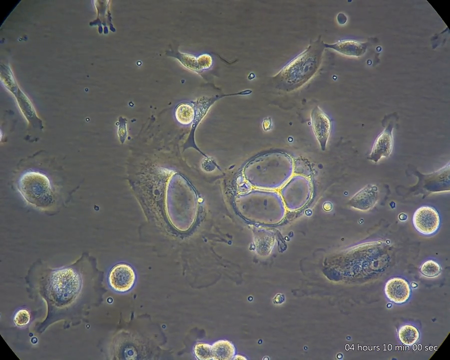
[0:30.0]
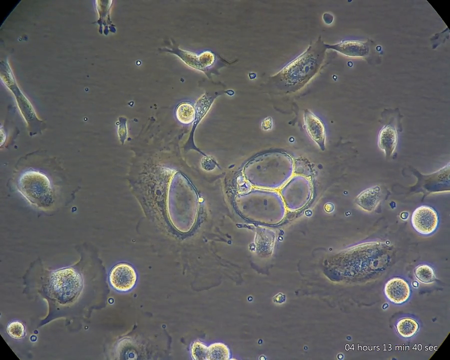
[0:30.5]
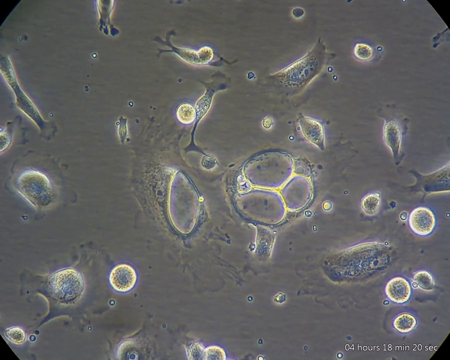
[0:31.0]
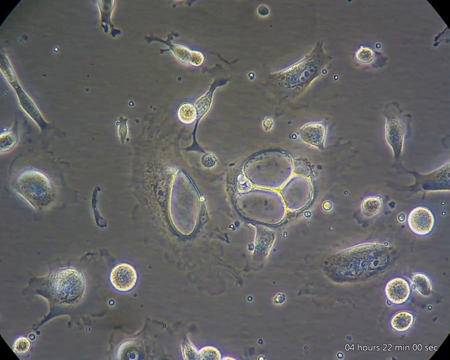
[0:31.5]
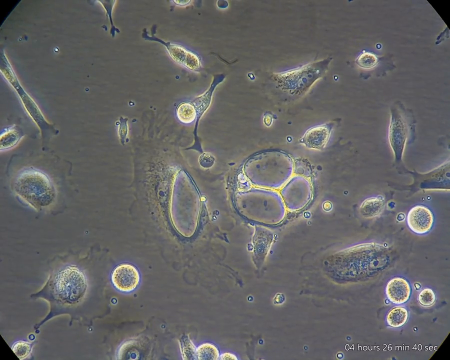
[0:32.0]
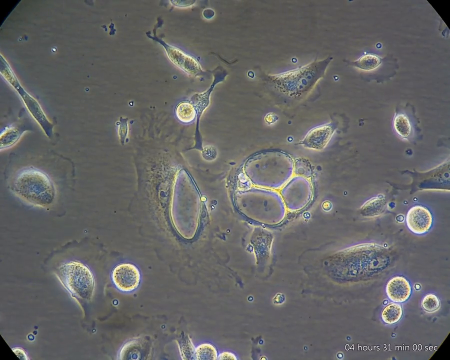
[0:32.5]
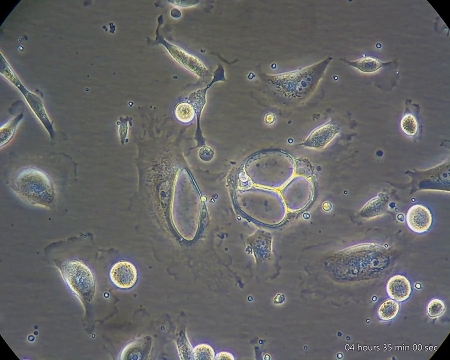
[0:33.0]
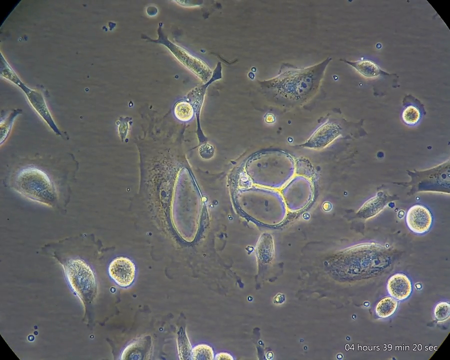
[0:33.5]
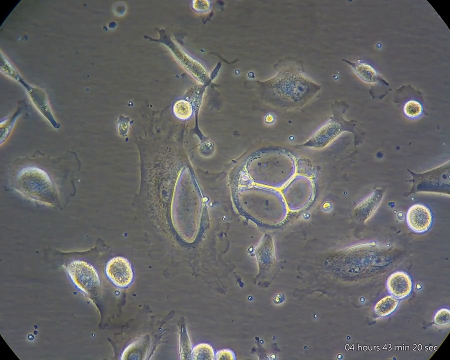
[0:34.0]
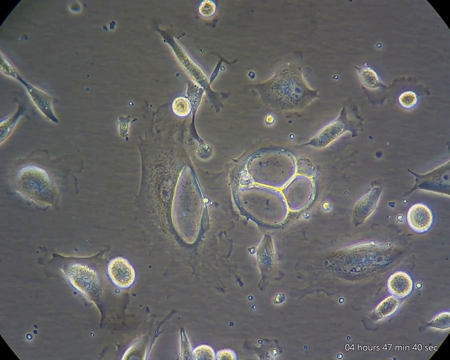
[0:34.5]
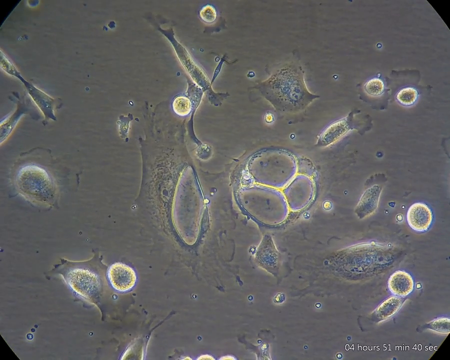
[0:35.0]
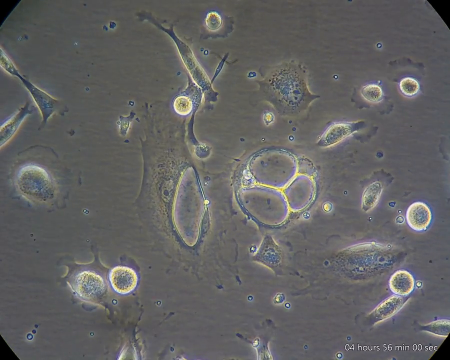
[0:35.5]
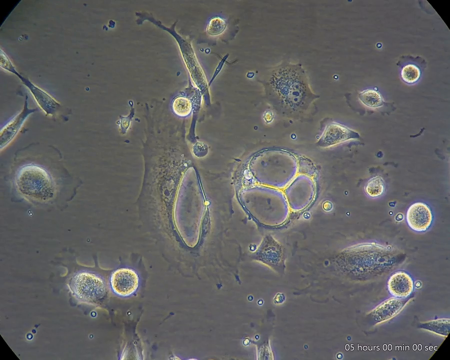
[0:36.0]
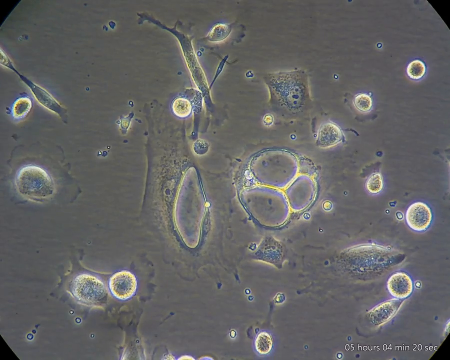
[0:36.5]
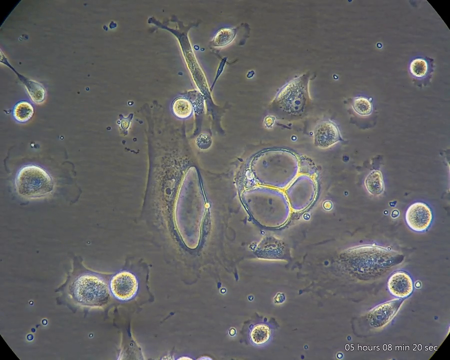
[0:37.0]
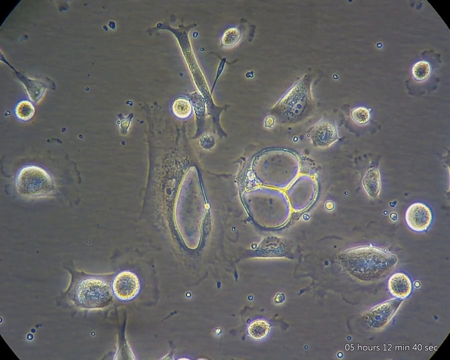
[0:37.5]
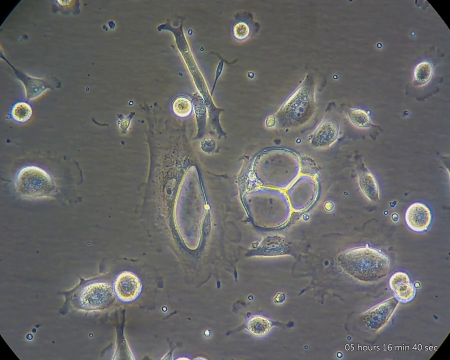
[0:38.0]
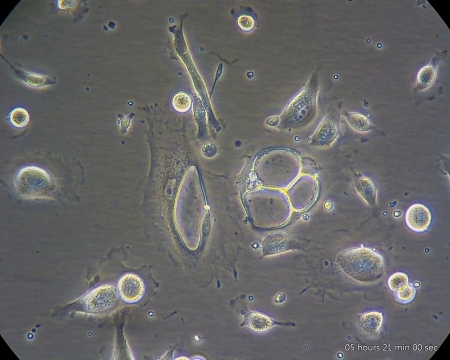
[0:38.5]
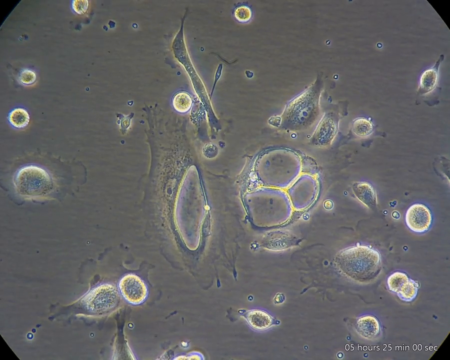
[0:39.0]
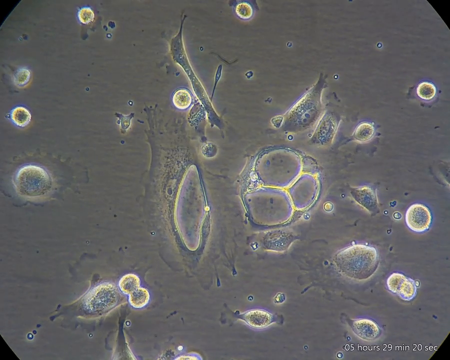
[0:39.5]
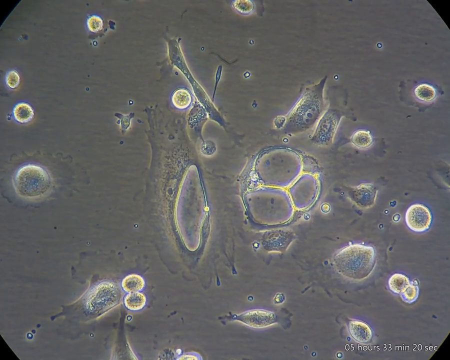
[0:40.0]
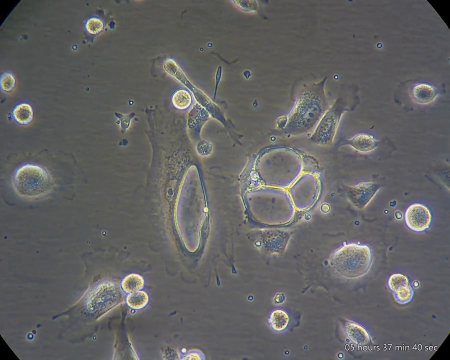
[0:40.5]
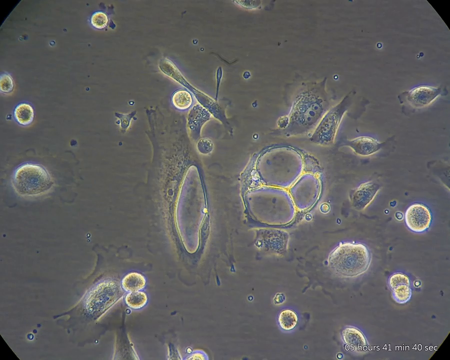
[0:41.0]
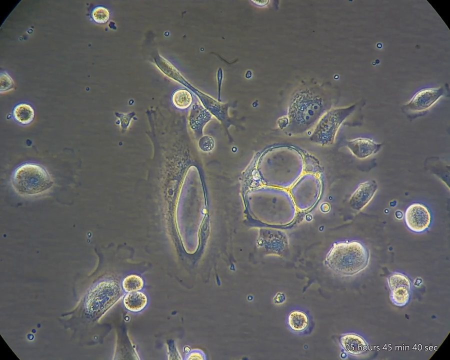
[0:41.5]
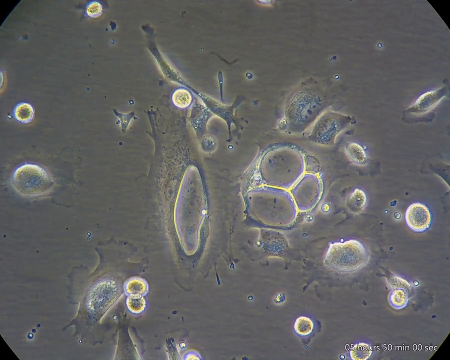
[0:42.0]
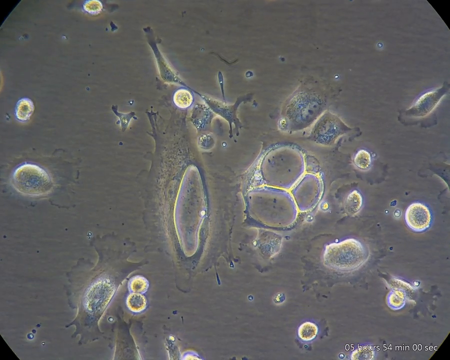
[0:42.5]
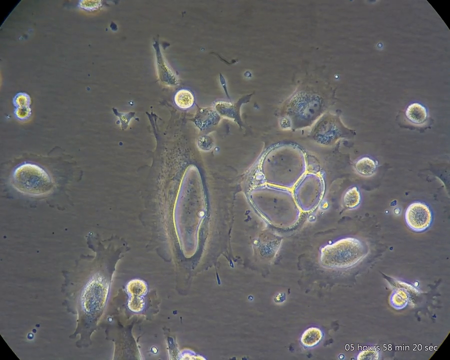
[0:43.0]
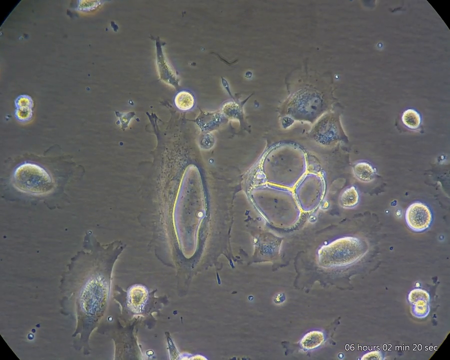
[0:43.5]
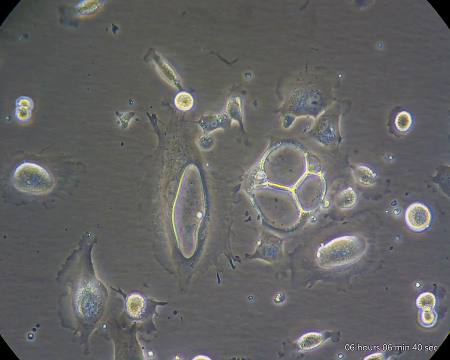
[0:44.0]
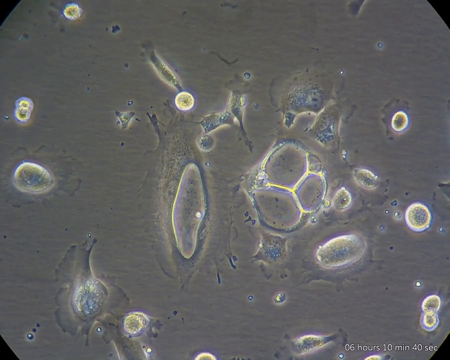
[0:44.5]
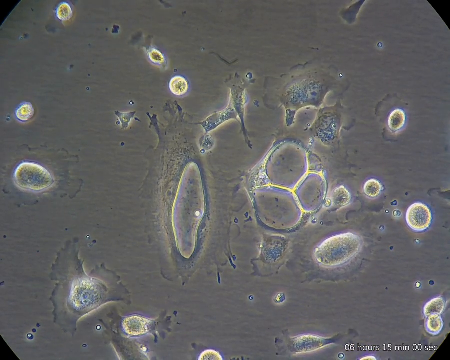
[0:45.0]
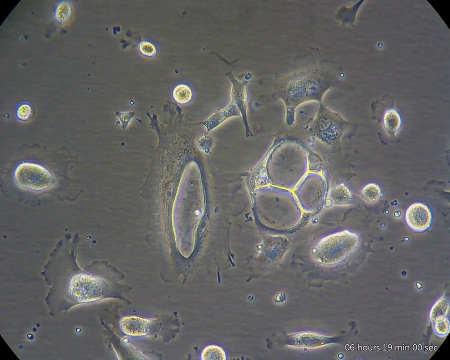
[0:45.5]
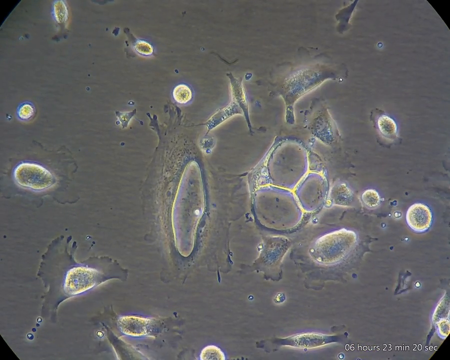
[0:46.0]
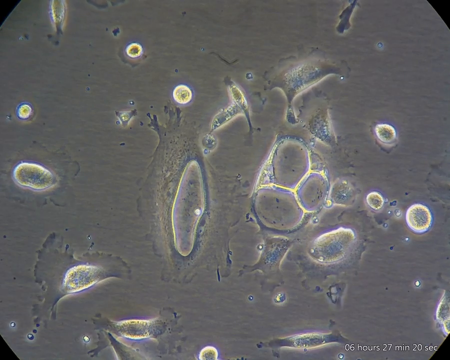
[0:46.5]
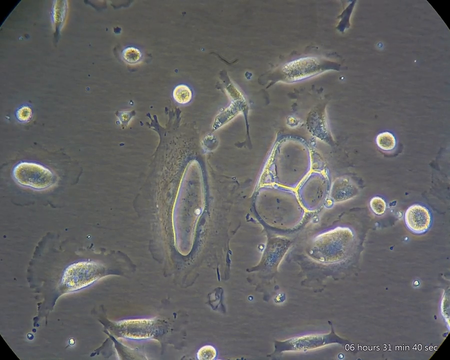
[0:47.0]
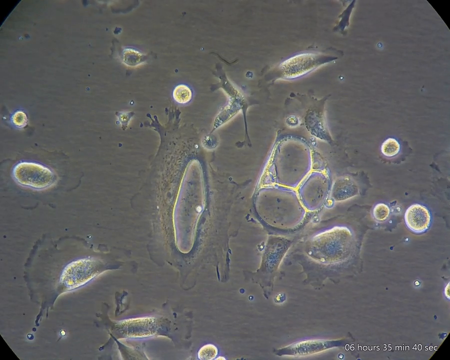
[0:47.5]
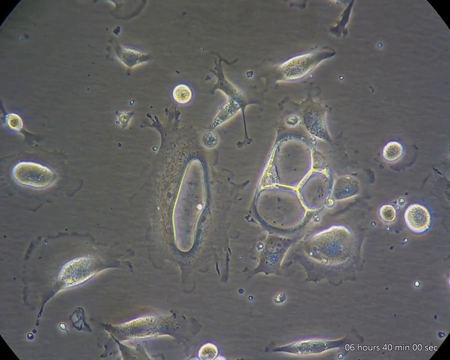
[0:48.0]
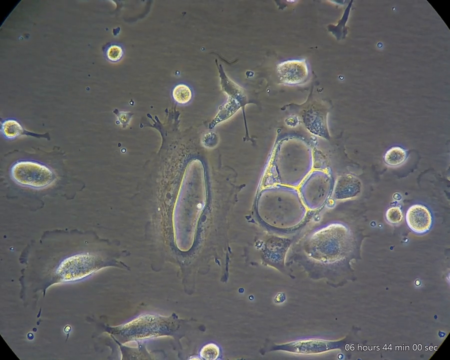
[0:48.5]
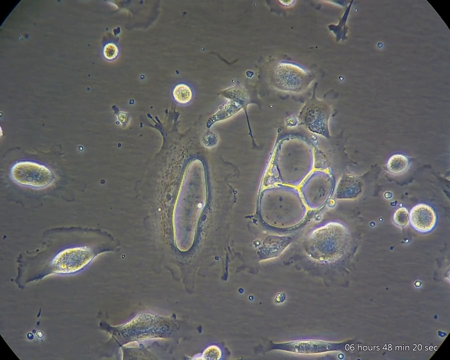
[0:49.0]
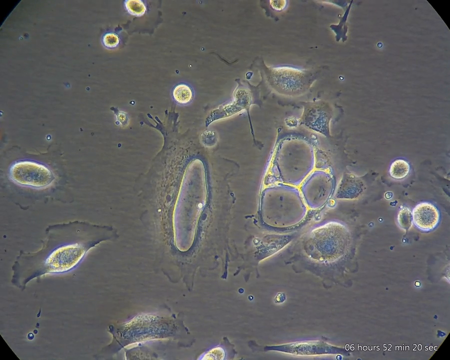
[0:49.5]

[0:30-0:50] The culture slide of various germs or molecules is seen under a microscope. At the start, many germs or molecules are in the background, and the smaller ones move very fast from the right to the left side of the screen. A clear one shaped similar to a banana moves very quickly from the right side to the left side and off the screen. Many of the other germs in the background are round, but a lot of them are longer with rough sides; these tend to move faster than the larger germs or molecules, which are stationary and stay in one spot more. On the right side is a round, clear germ composed of three bubbles, with edges around it that have a green tone on the top. Various other bright green germs are smaller and perfectly round.